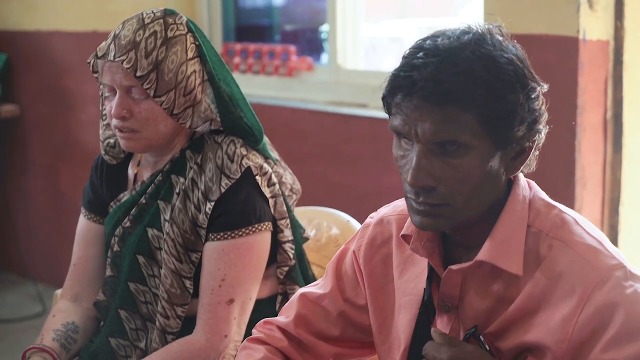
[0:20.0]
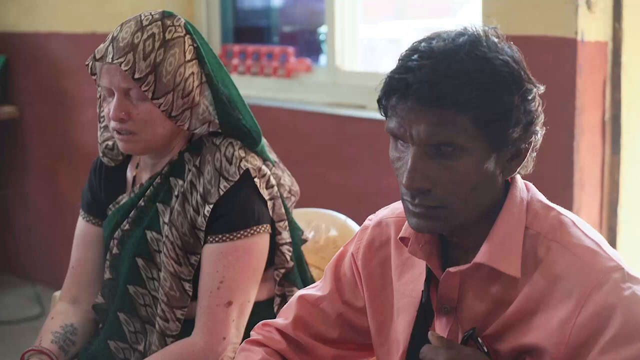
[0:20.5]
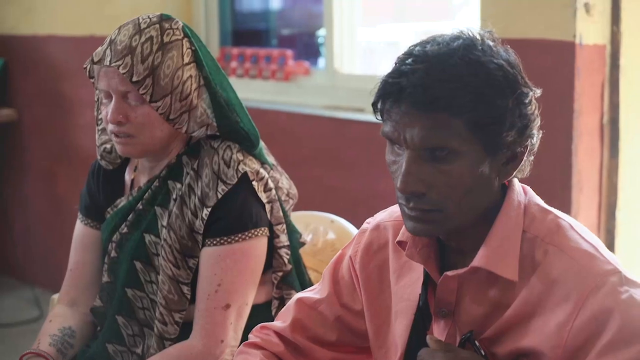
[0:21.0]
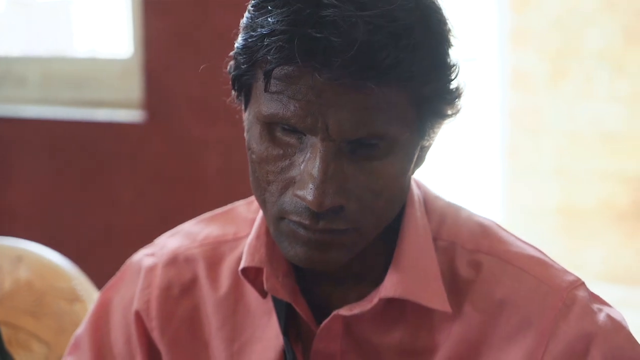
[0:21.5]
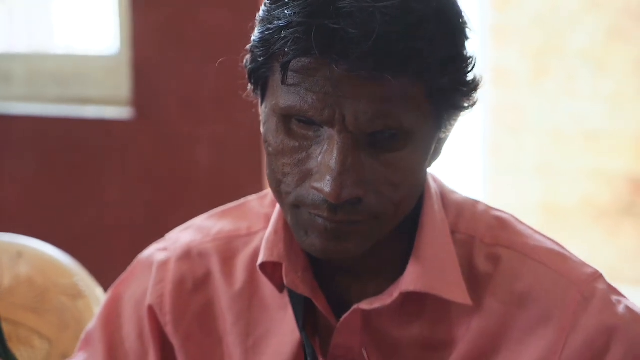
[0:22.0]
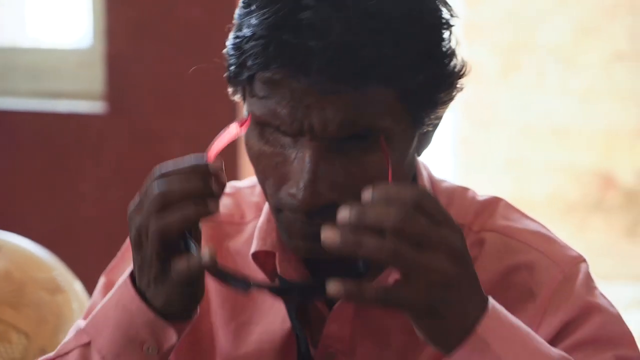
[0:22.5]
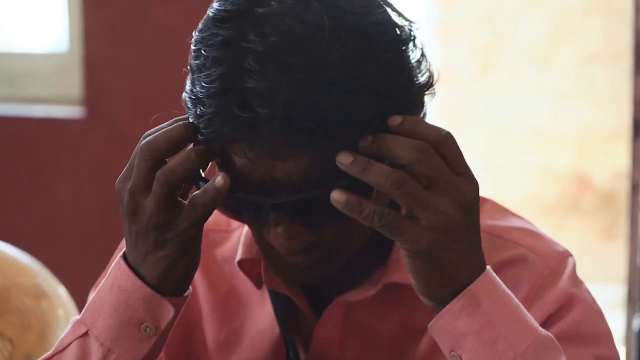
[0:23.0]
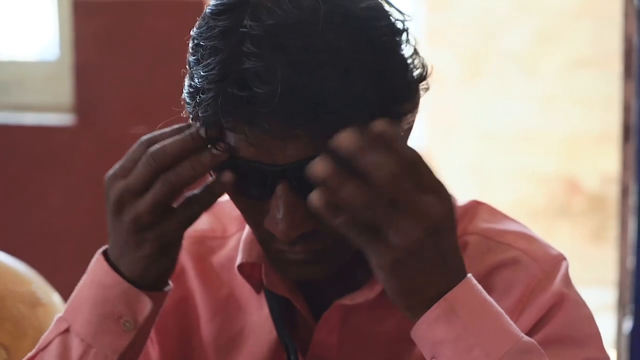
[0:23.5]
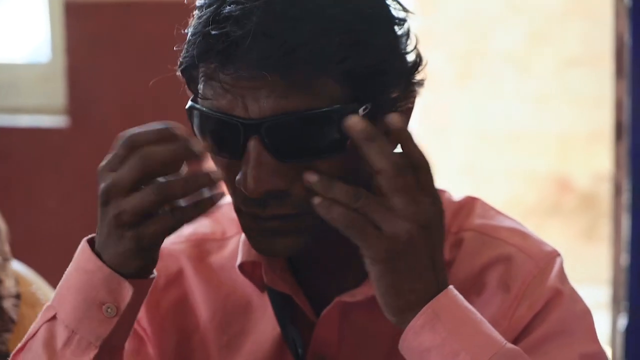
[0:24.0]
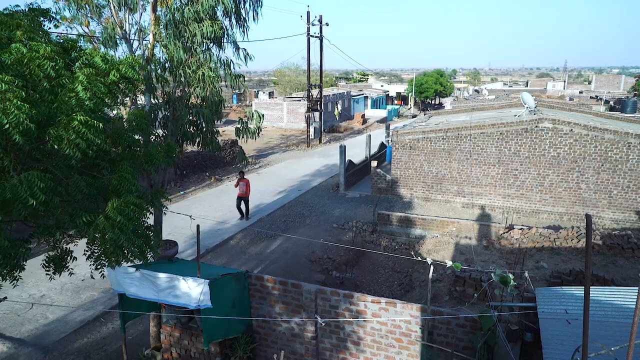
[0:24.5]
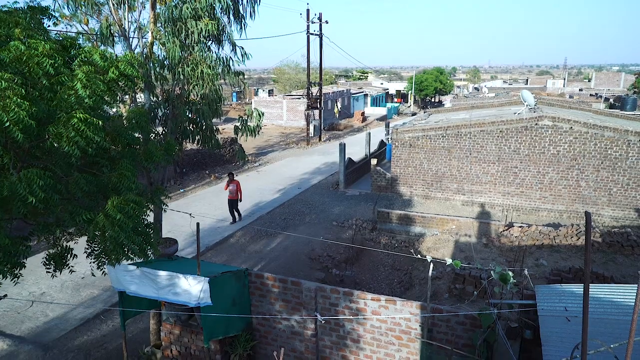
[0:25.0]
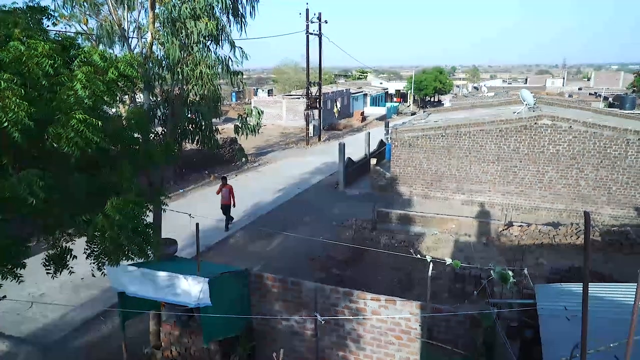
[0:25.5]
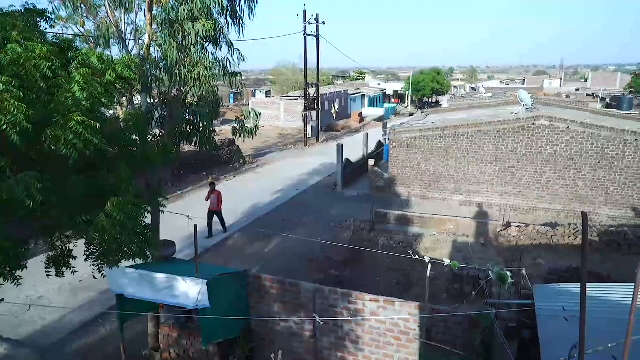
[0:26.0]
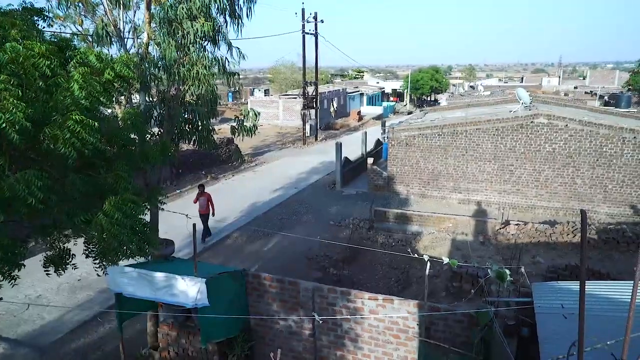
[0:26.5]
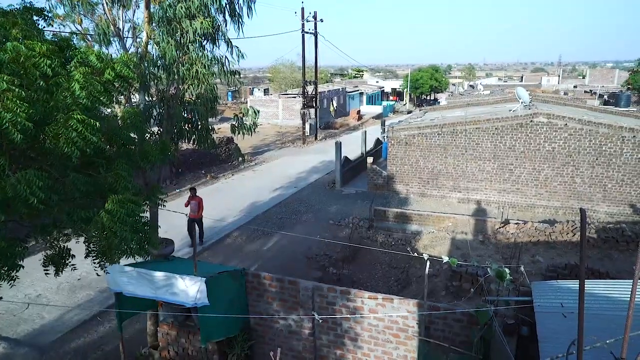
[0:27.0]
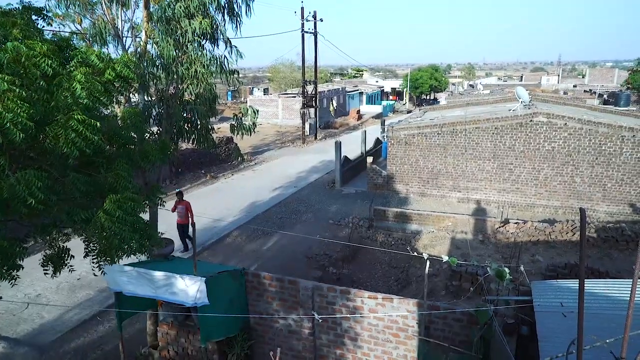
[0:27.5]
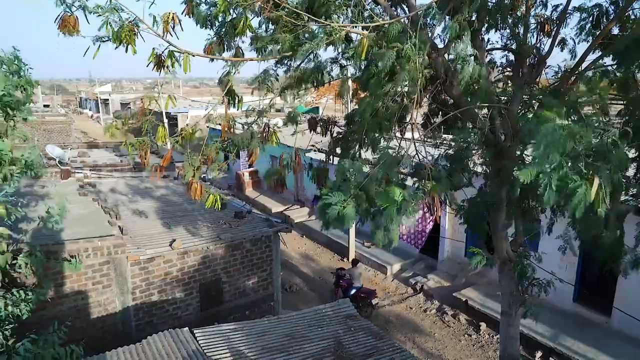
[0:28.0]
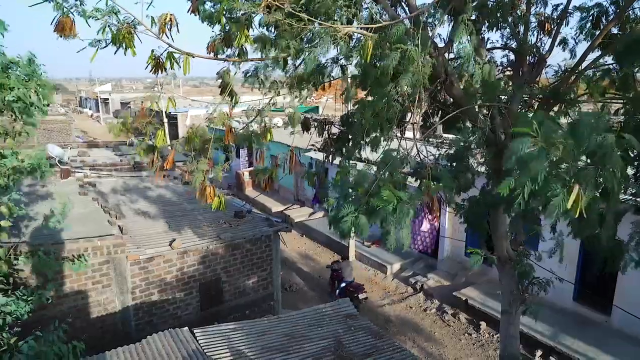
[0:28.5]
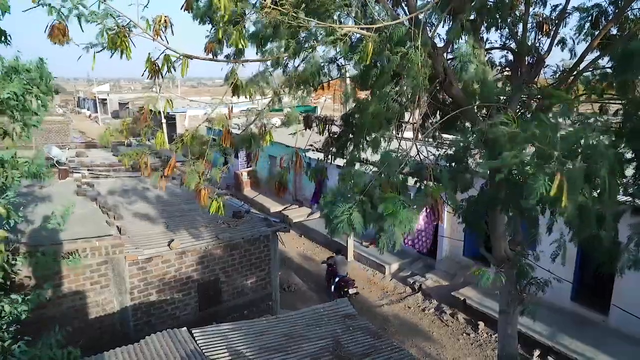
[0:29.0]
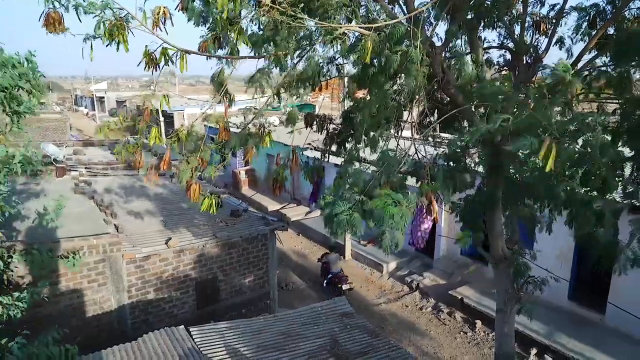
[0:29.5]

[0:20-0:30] The woman and the man are shown, and the camera kind of moves over to focus on the man as he puts his glasses back on. Another shot shows brick buildings and a road made of some material that does not look paved but also does not look like dirt or rock, with several buildings in the back, some trees, and power or transmission lines. A man, possibly the same one since he wears a salmon shirt, walks from the middle of the frame down to the left. Another shot shows more dwellings along the road, more trees and brick buildings along a dirt kind of walkway, and someone seems to be riding down the walkway on a motorcycle or something. The scene returns to the couple; the man clearly has no eyes. In a wider shot he is still holding his head down.